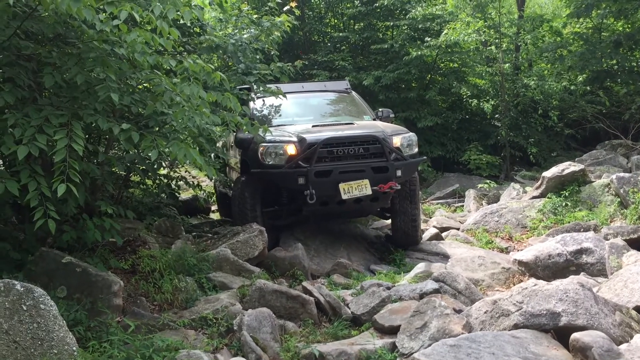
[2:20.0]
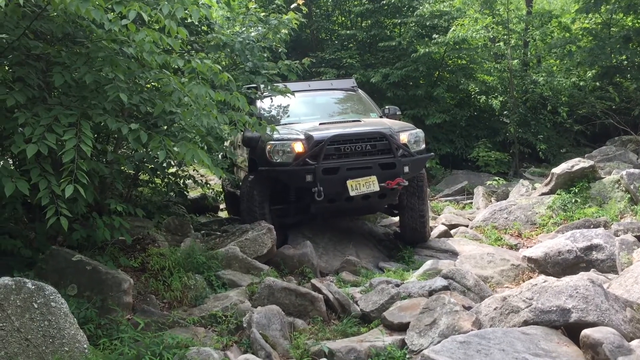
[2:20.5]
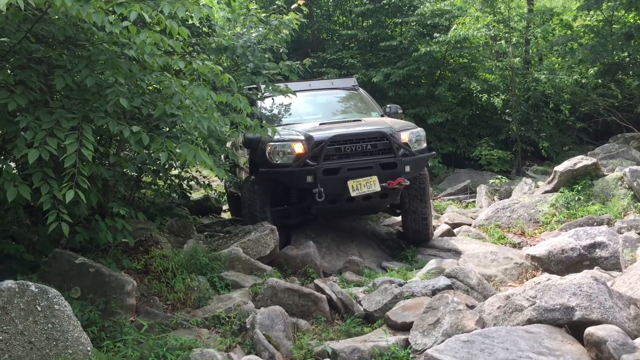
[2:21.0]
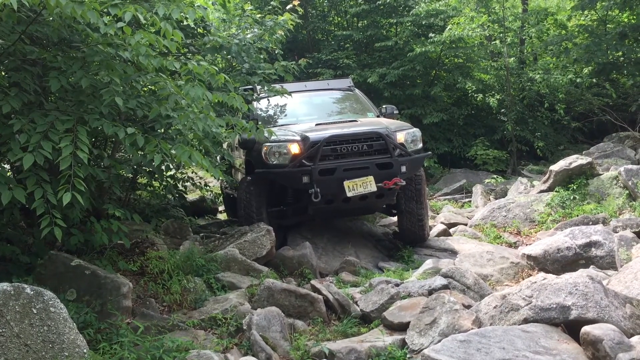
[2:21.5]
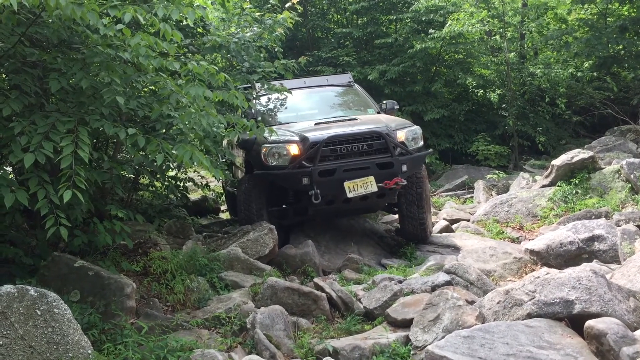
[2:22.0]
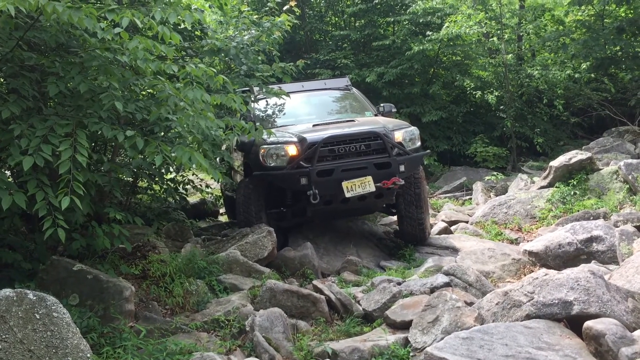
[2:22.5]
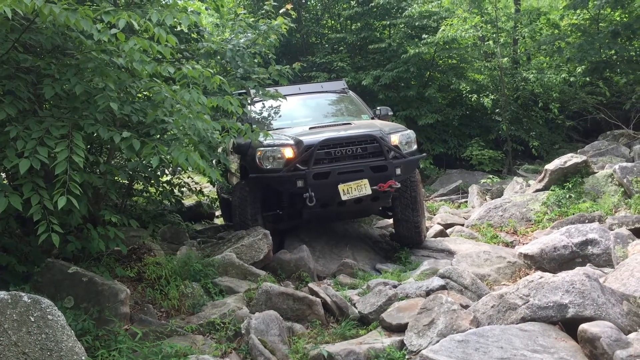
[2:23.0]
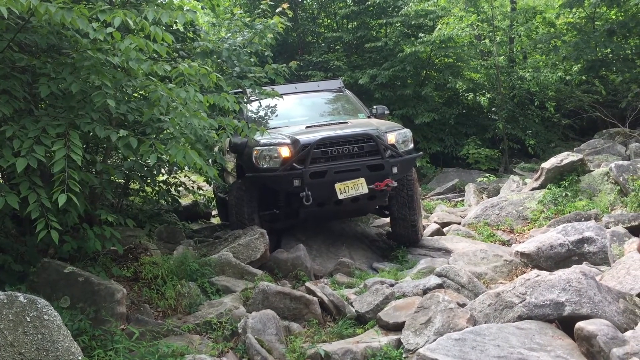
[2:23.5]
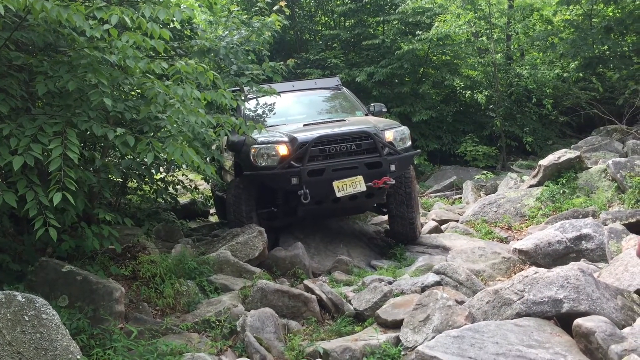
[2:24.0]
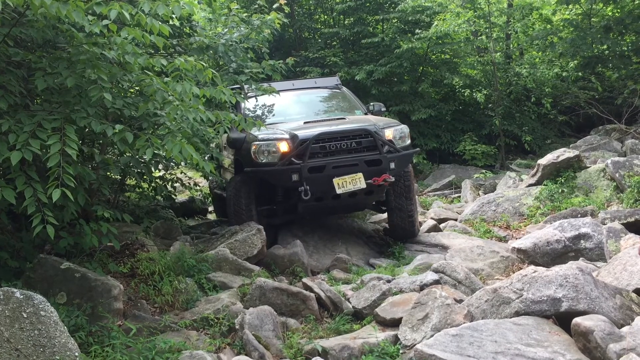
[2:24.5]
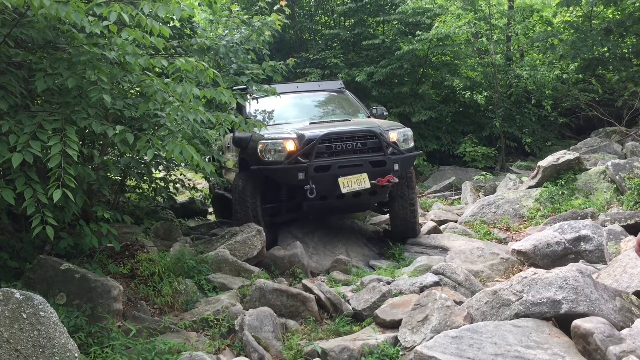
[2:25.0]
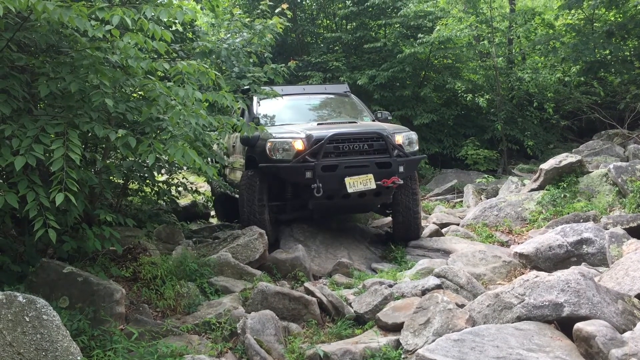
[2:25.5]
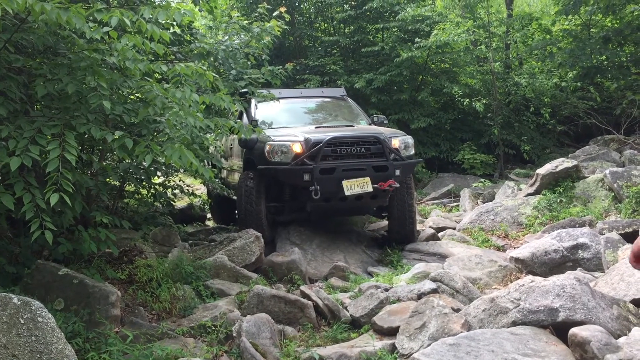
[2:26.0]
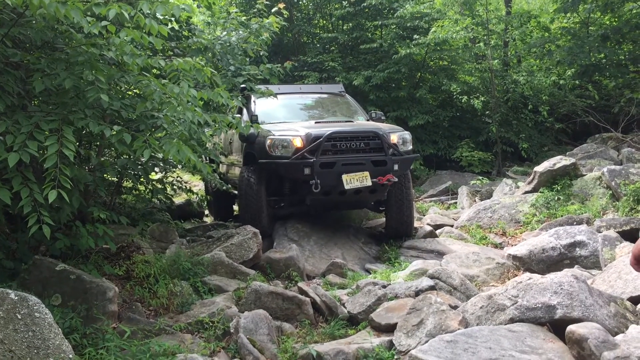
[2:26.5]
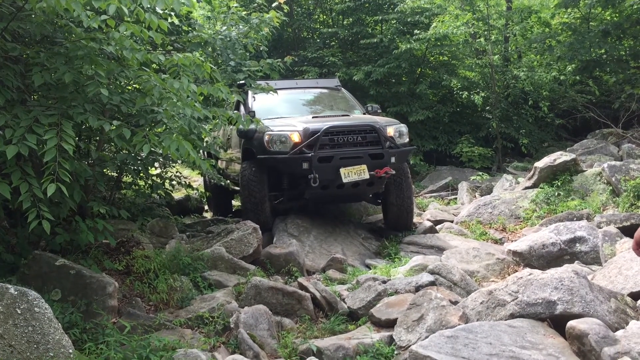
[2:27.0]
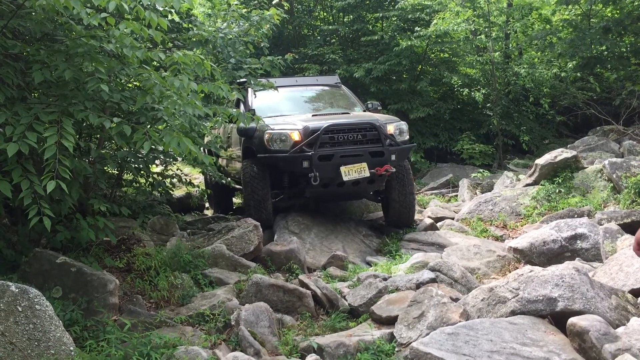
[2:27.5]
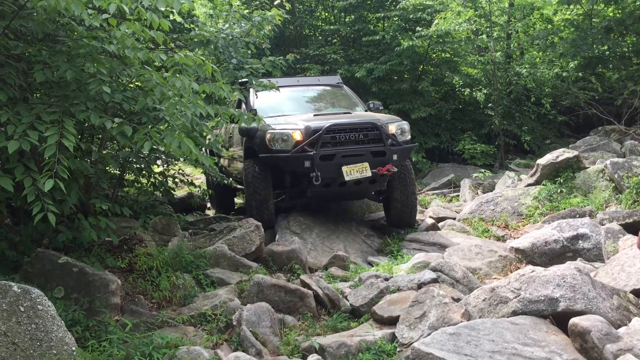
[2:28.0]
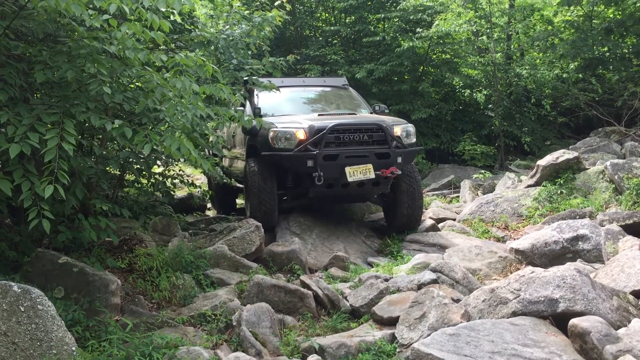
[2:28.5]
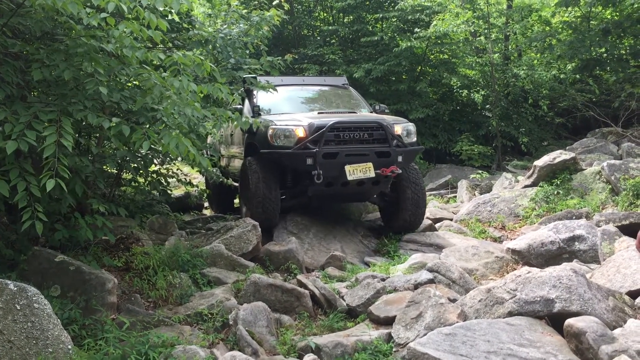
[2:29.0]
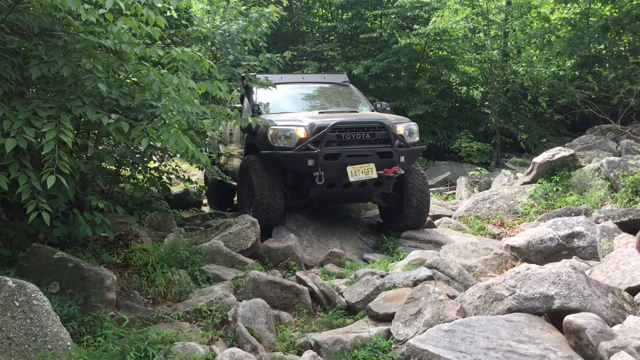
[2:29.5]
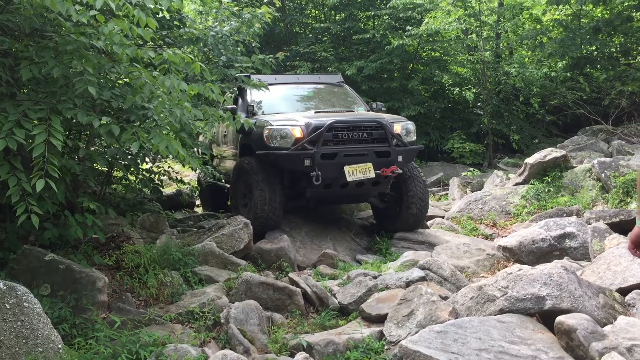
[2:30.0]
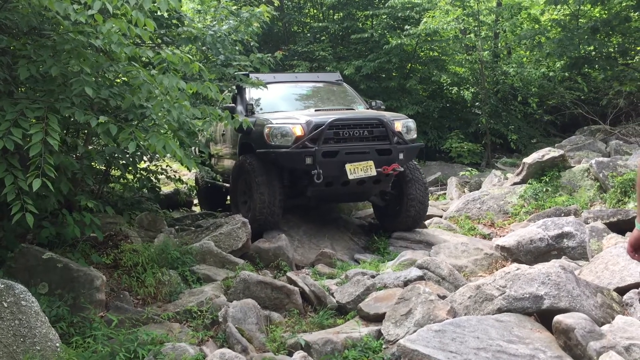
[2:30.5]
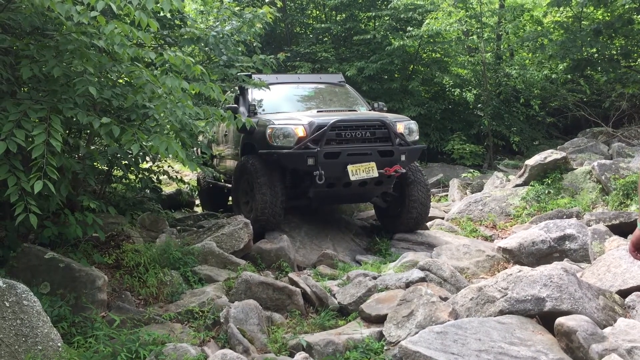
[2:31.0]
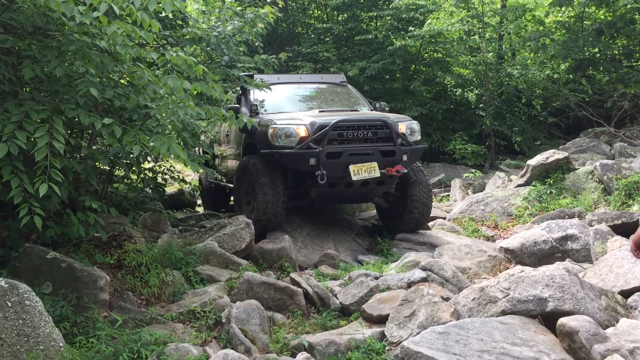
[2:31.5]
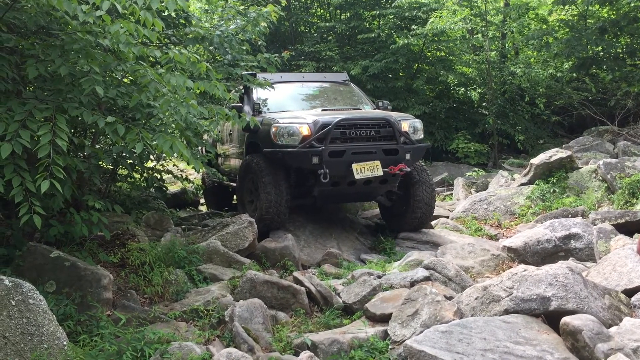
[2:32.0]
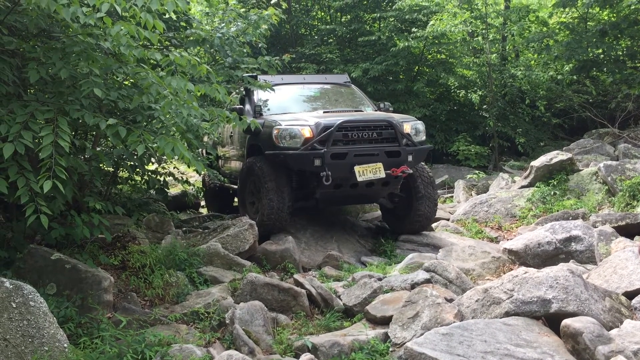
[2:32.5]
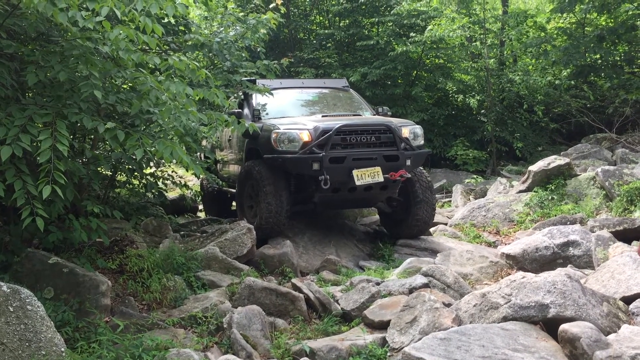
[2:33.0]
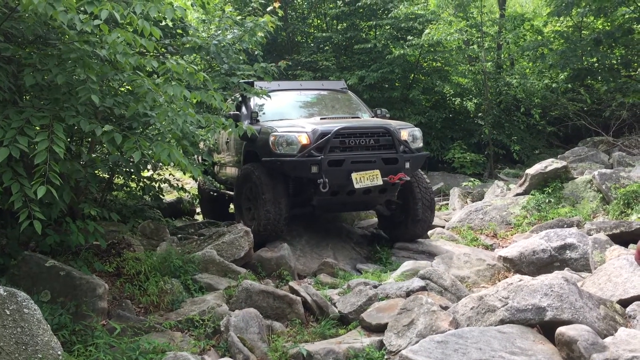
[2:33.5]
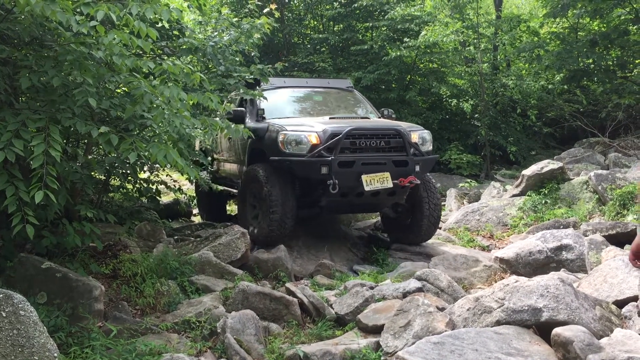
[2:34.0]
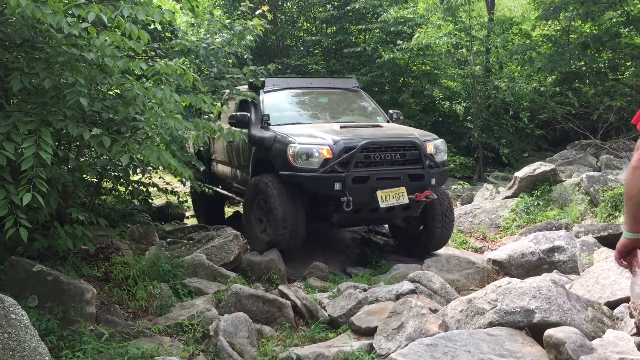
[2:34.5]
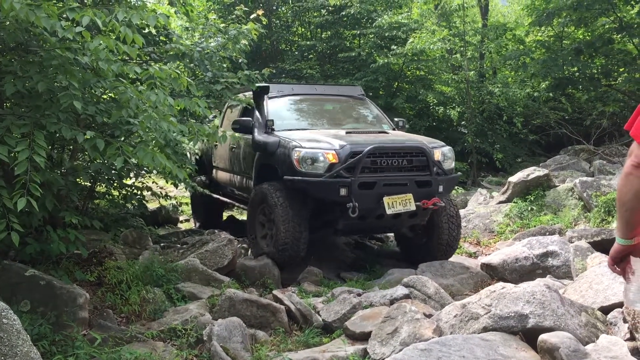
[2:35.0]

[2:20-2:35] The man in the red shirt is now completely off the screen. About two inches from the bottom on the left side, a big bush comes over about a third of the way; a little of the front of the bush covers the passenger side window of the truck and down the side. Behind the truck and on the right side are thick trees, with the jagged rocks underneath. The truck now has just the smaller headlights on, not the full headlights. It is kind of angling to the left, with the camera straight in front of it about 10 feet away. It goes slowly, but a big rock is in the way on the passenger side, so the driver backs up a little and turns right to try to go over a smaller rock. The wheels spin a little until the truck finally comes up over the rock. As it does, a little of the passenger side is visible as it angles more to the right, and on the right a little of the man's red shirt, the back of his forearm and elbow, and his hand still holding the water bottle with a greenish-looking bracelet are visible. The truck is kind of heading toward him, about 10 feet away. It rocks a little as it goes over this bigger rock, trying to get past. These rocks are a little bigger than the last ones but more scattered out.